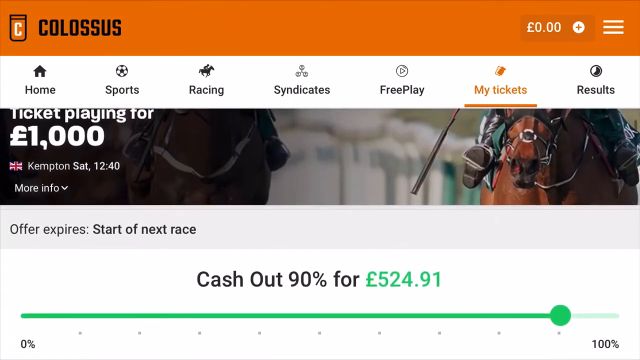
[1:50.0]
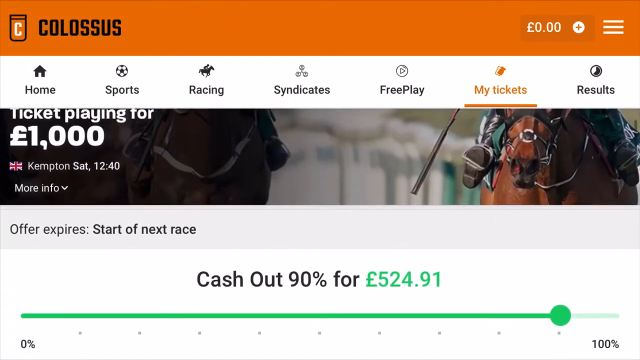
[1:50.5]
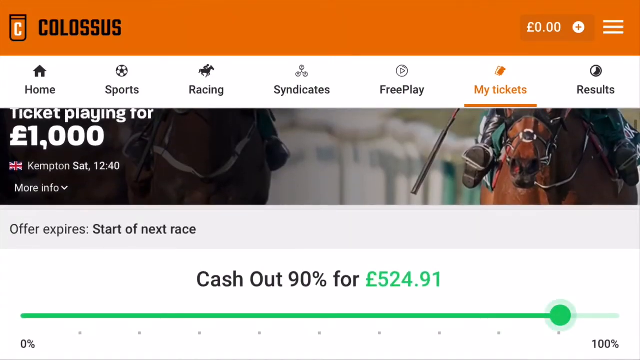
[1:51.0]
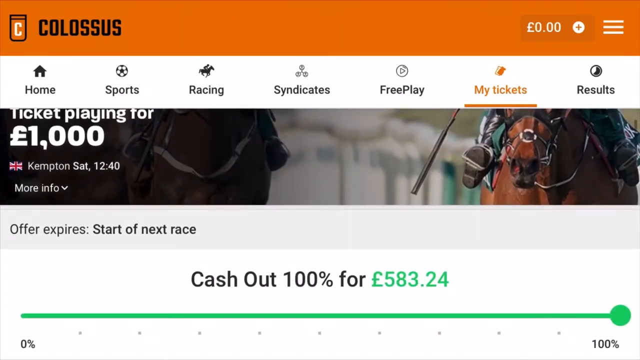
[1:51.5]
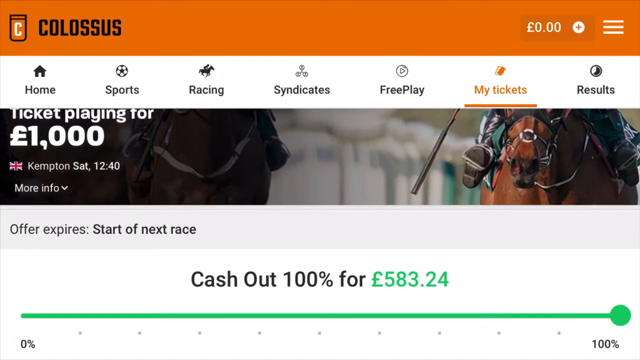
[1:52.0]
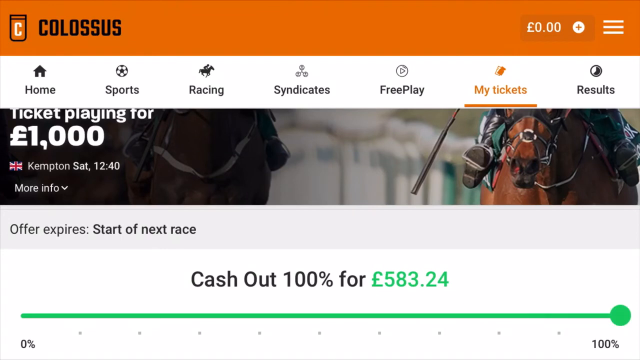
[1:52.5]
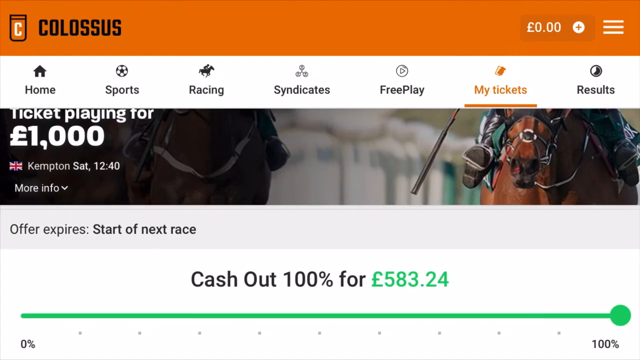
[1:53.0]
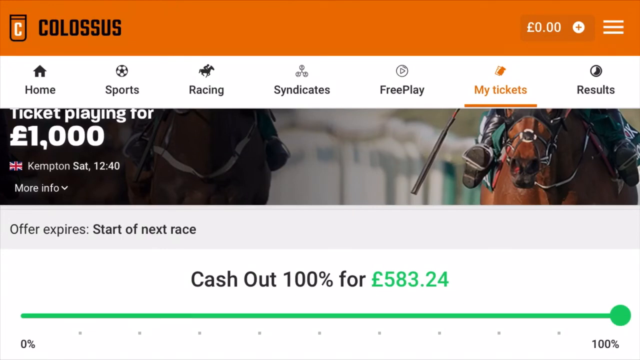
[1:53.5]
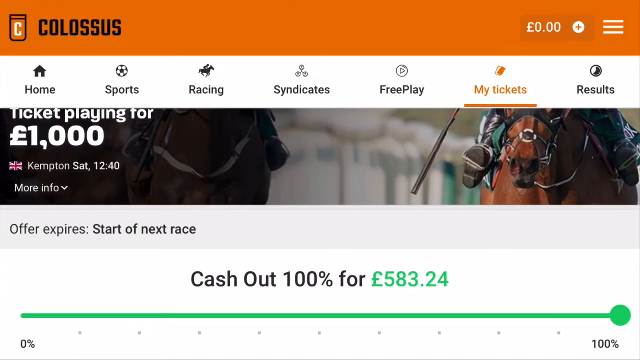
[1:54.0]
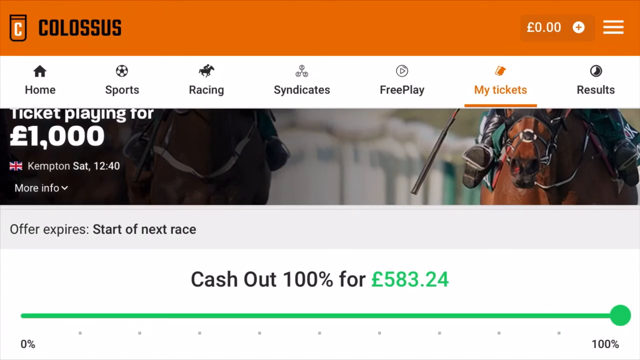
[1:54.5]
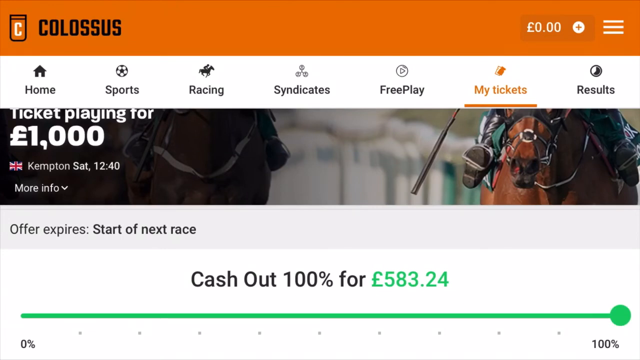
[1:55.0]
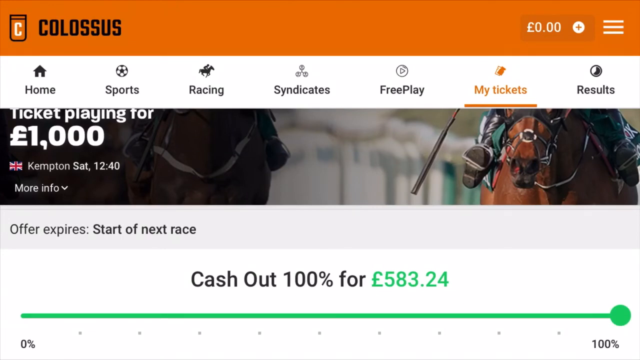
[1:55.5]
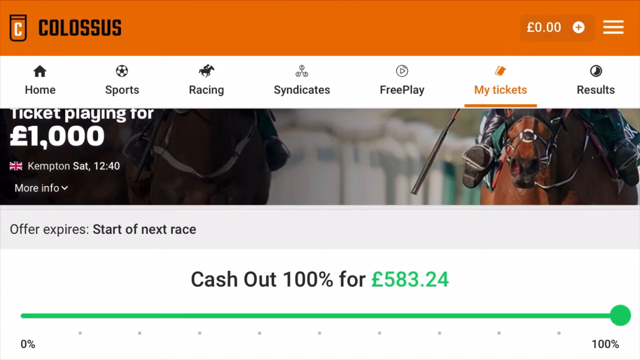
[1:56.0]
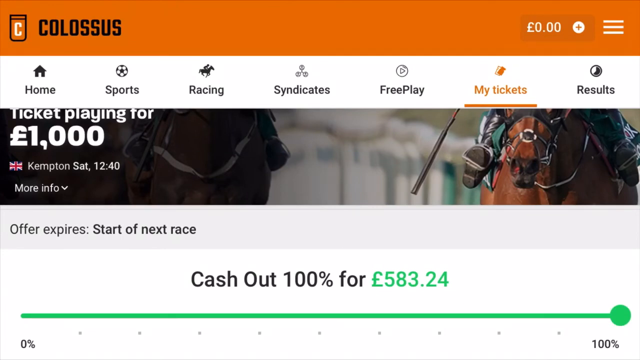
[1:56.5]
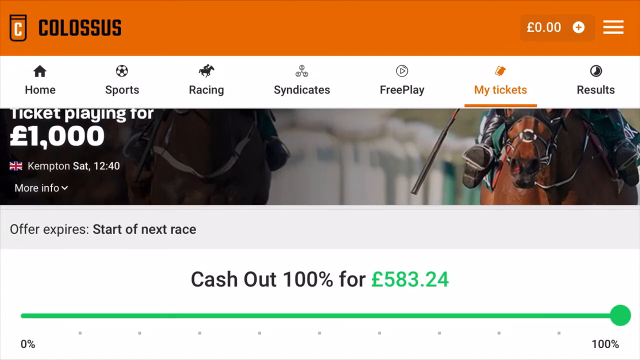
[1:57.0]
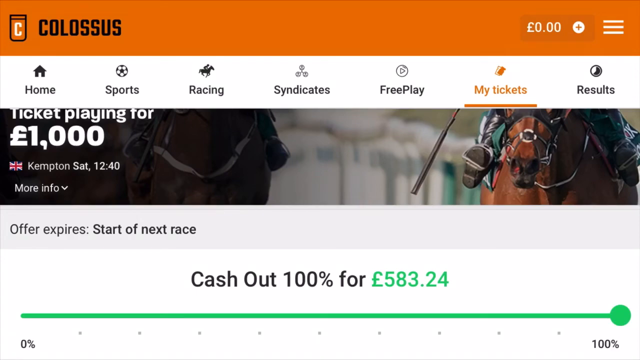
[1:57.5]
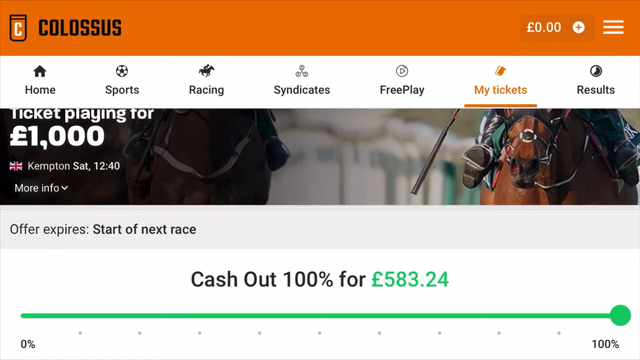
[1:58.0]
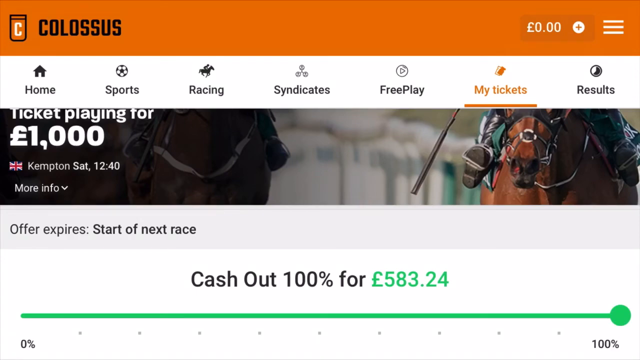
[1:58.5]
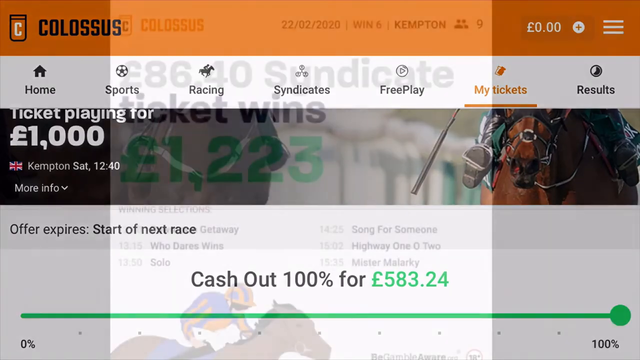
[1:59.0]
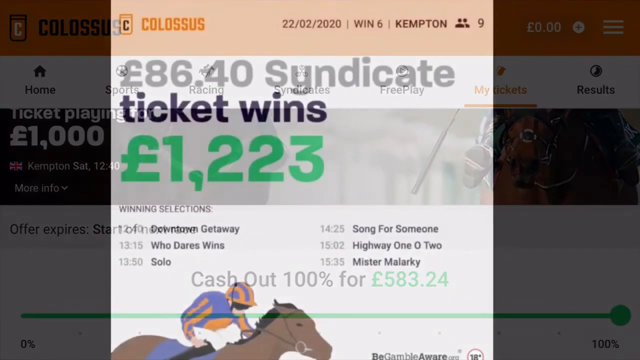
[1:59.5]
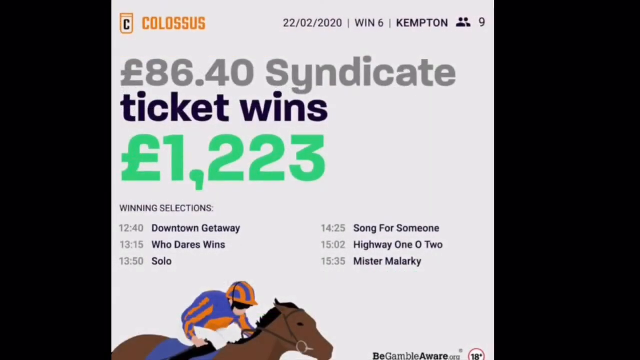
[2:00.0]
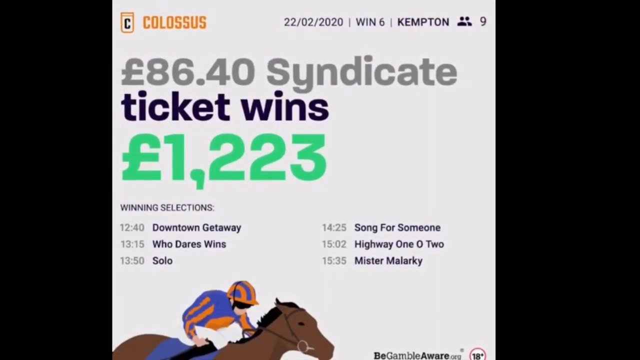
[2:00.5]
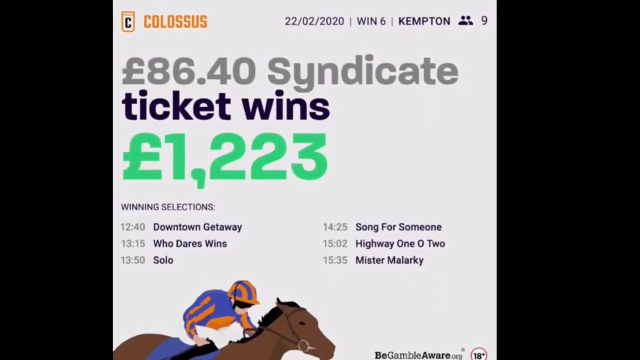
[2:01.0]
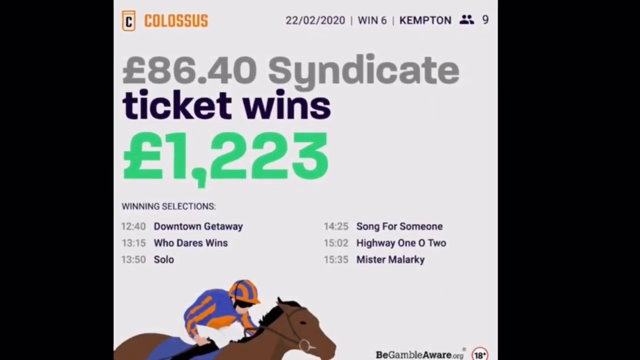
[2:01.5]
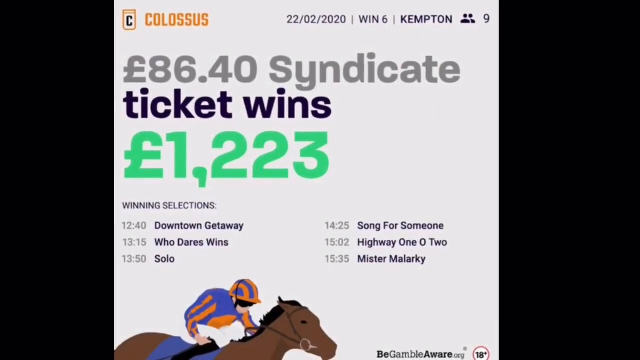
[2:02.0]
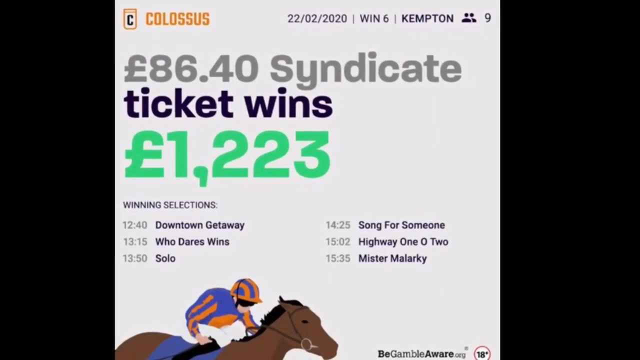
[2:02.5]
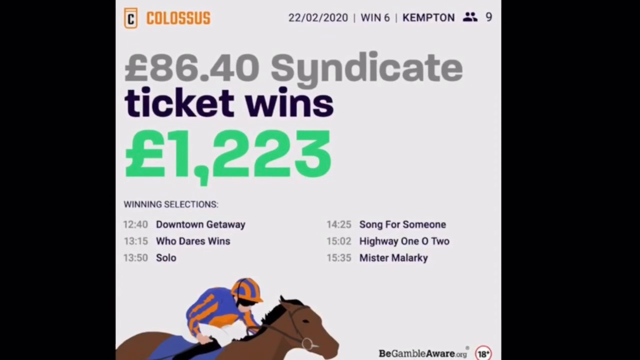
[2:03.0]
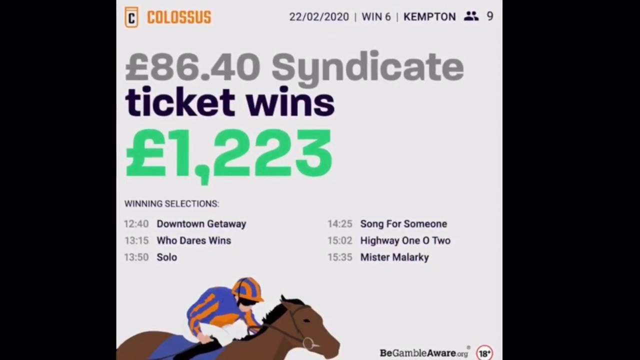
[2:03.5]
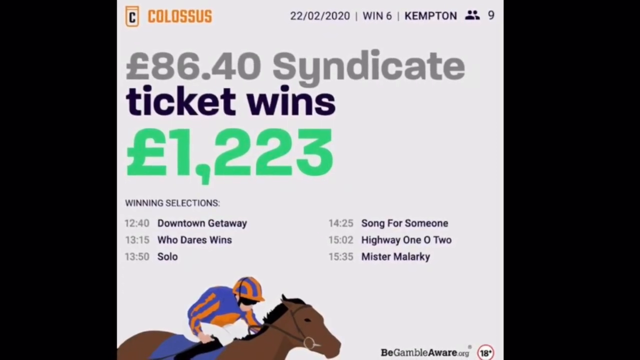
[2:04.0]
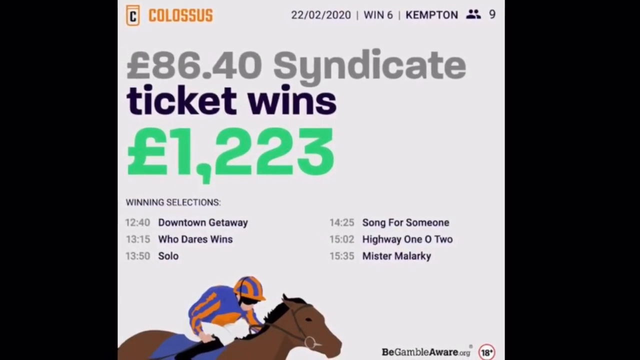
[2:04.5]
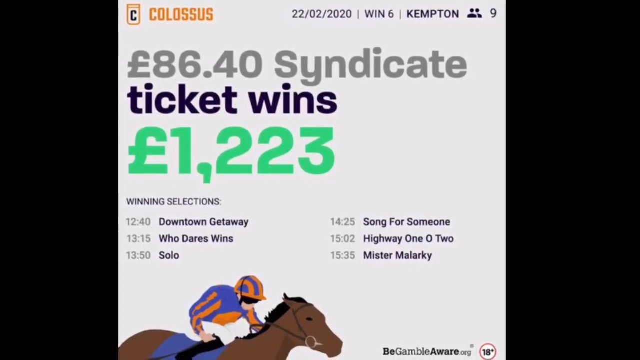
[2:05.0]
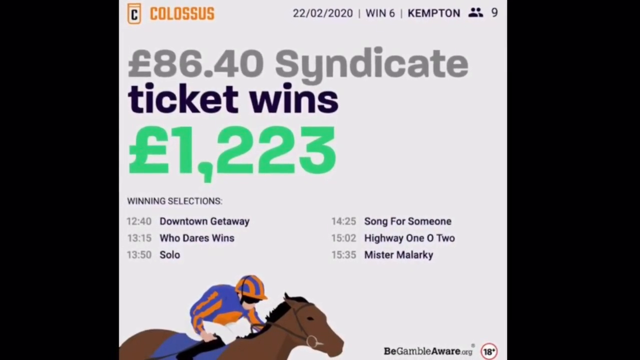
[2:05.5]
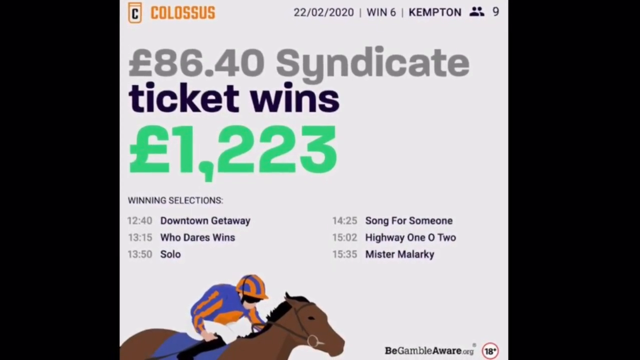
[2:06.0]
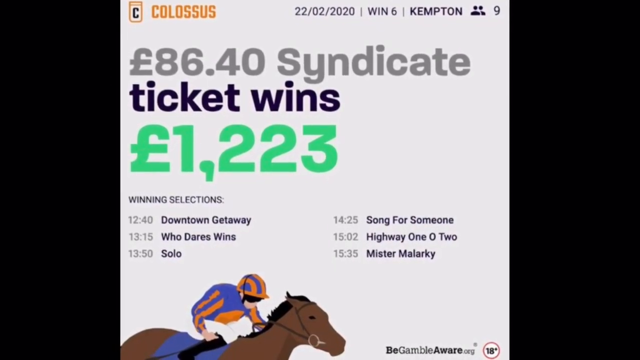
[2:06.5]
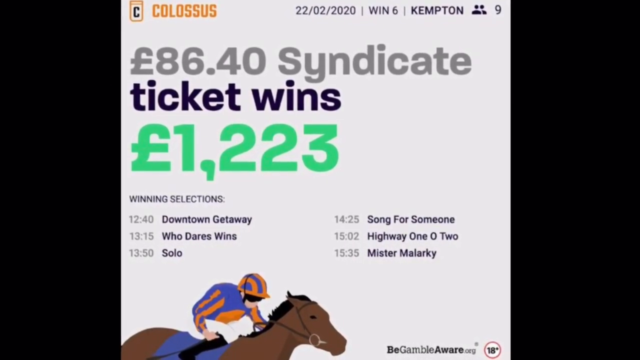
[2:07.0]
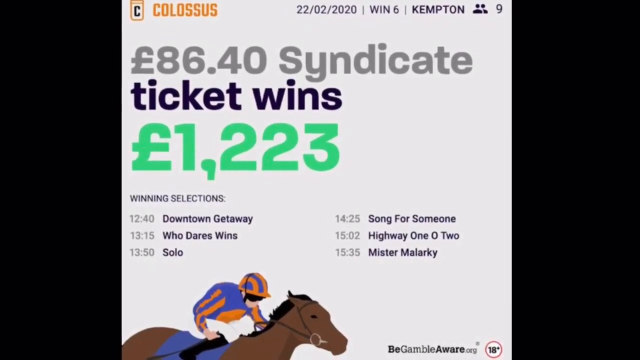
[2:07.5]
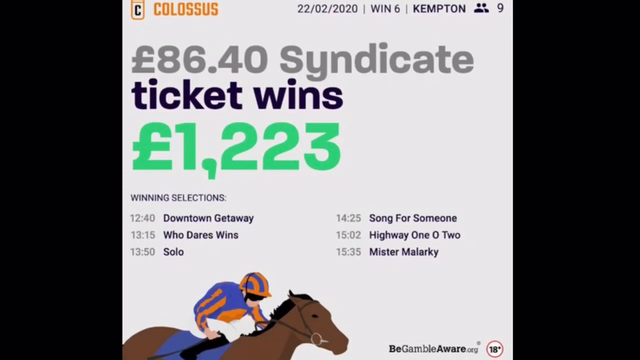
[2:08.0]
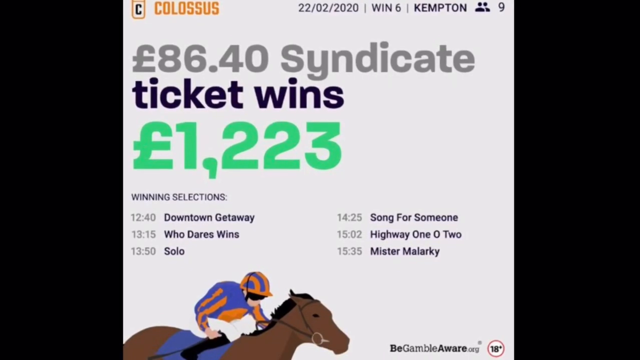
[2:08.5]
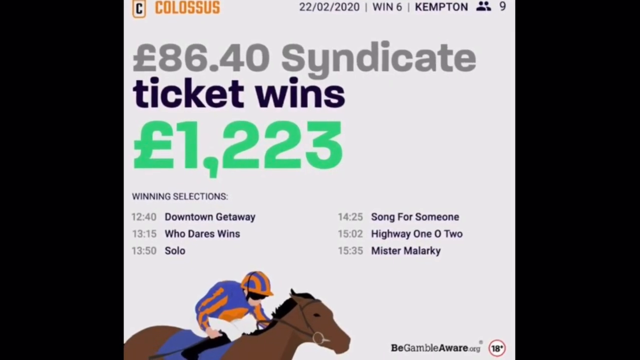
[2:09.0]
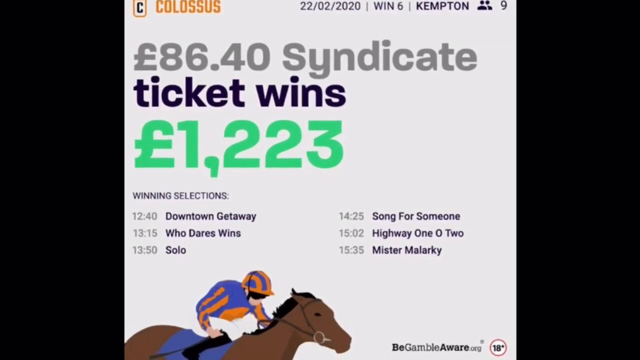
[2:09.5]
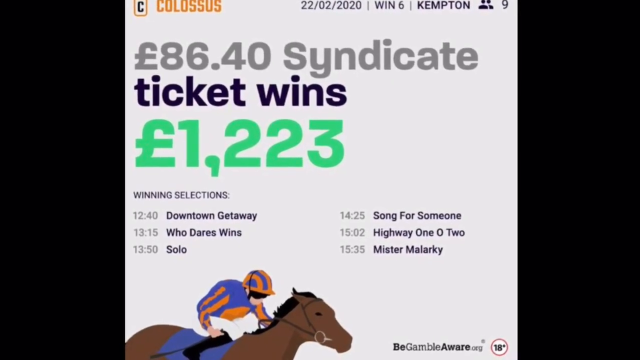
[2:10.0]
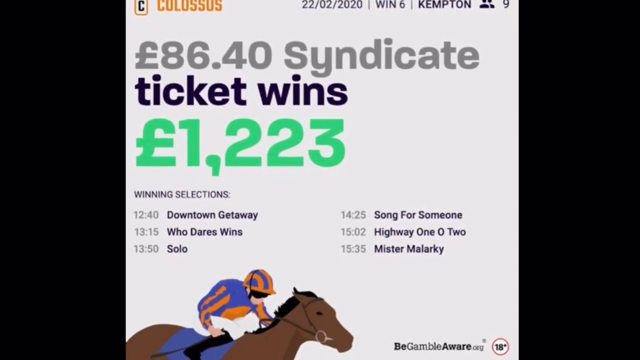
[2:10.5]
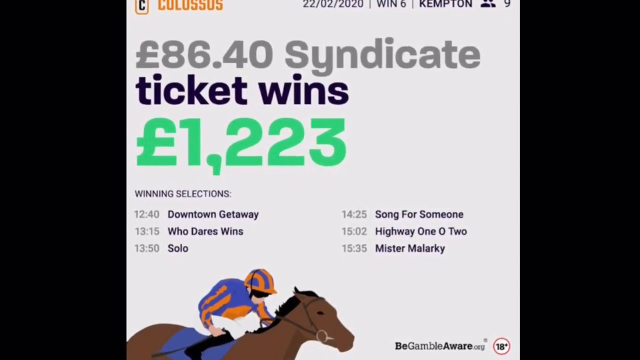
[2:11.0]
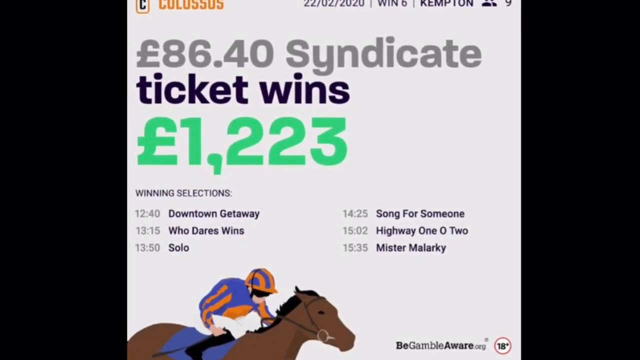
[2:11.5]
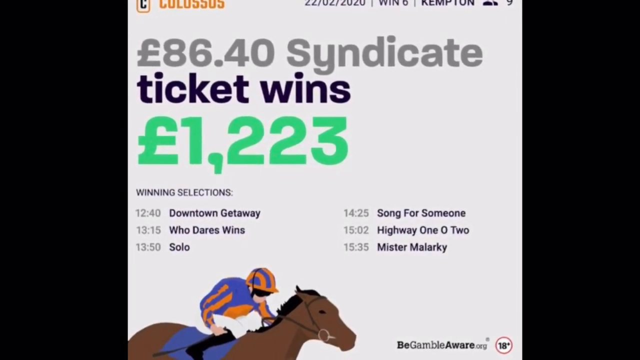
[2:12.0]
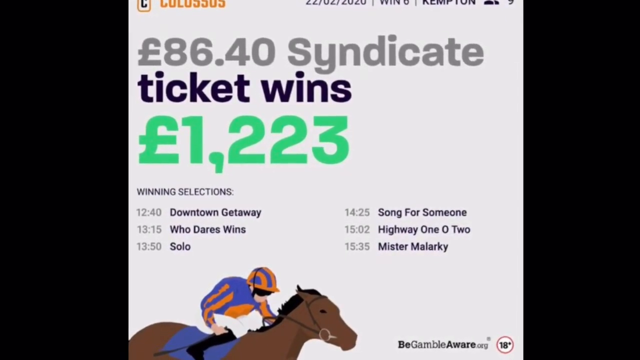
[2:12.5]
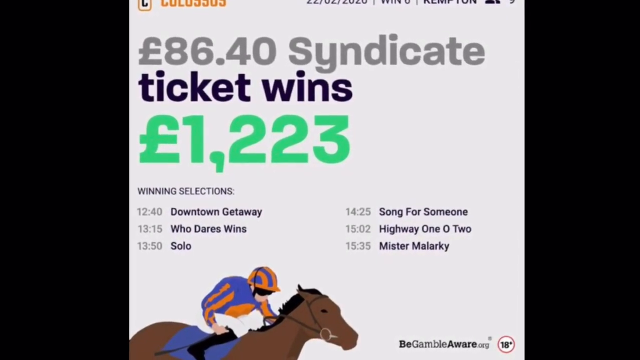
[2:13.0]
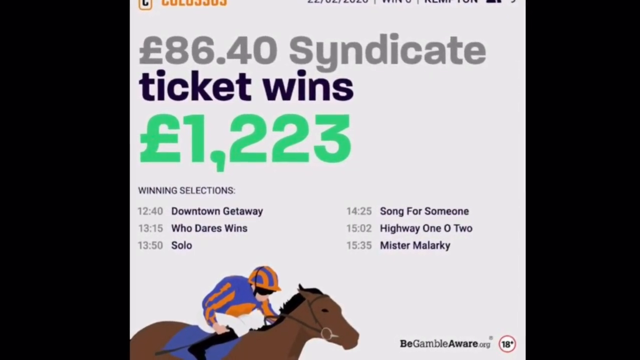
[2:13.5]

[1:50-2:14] A Colossus page about ticket playing says "ticket playing for $1,000", not in US dollars, with a different symbol in front of the number. A little British flag is visible. It switches to another page that says "86.40" and "syndicate ticket wins $1,223". A cartoon-like picture shows a brown horse with a jockey riding it, the jockey in a purple and gold outfit with stripes on the hat and down the sleeves, on a white background. It says "Kempton", two profile pictures are side by side, and at the top it is dated "2-22-2020". The page shows playing for the 1,000 ticket. Then a picture of a real horse appears with a jockey riding it, but the top is cut off, so the jockey's head is not visible.